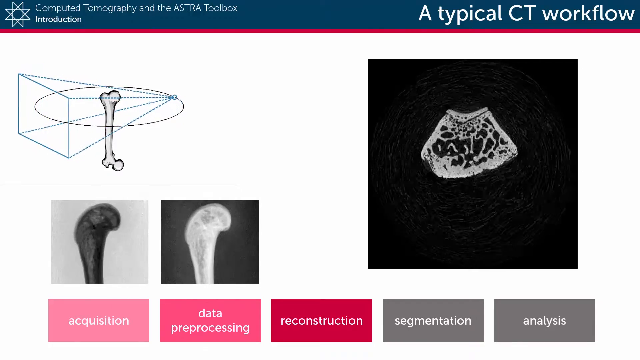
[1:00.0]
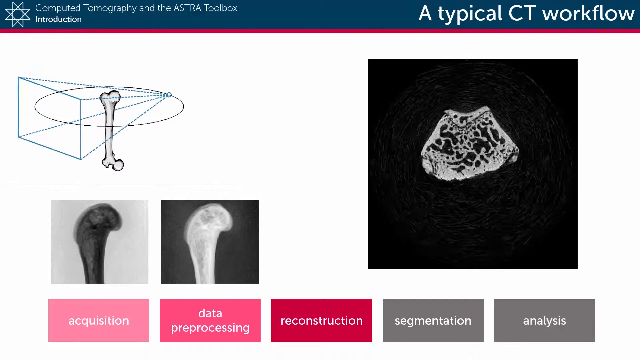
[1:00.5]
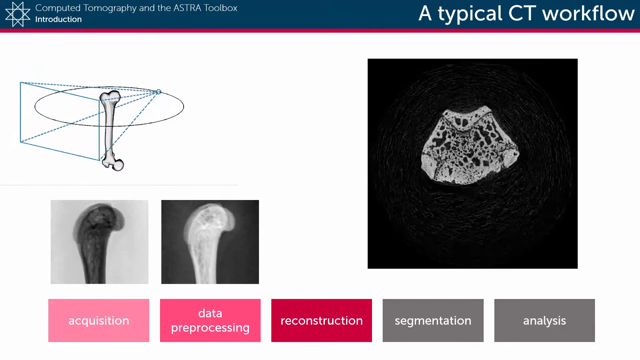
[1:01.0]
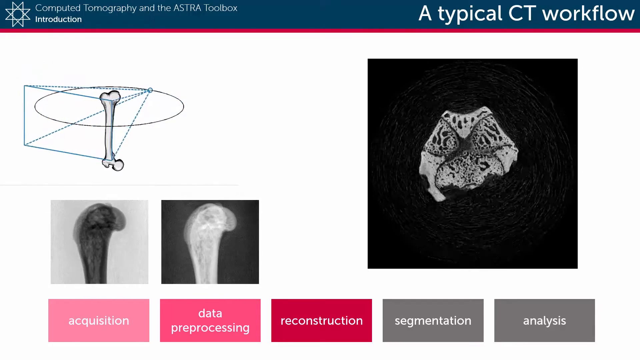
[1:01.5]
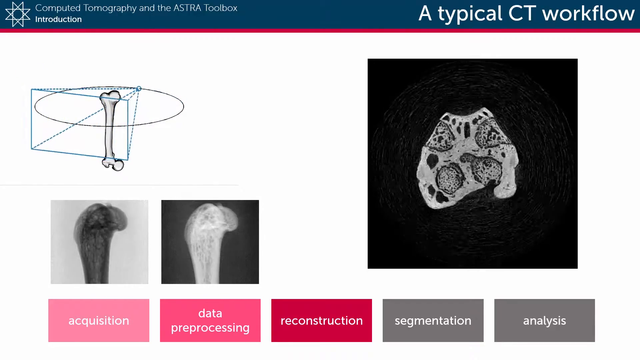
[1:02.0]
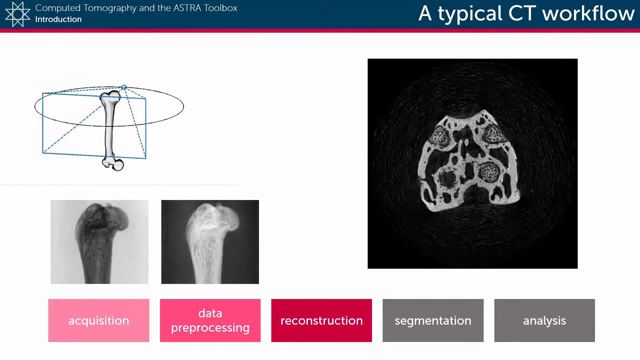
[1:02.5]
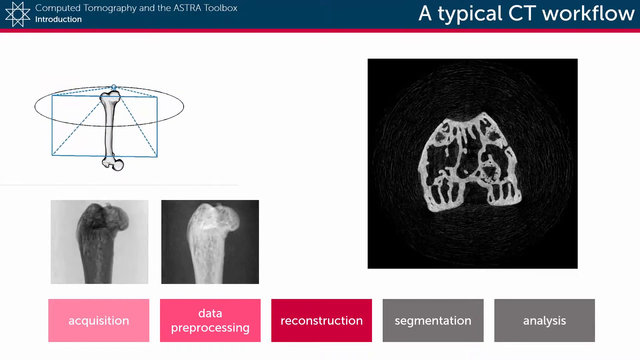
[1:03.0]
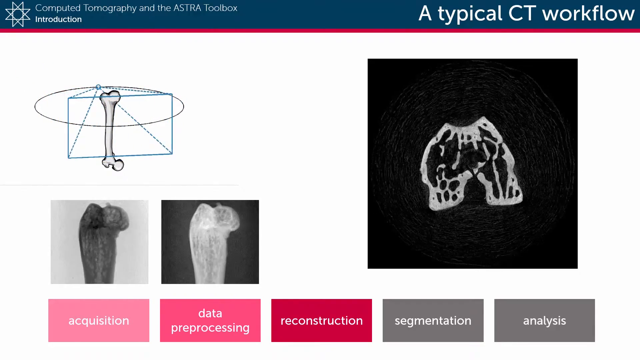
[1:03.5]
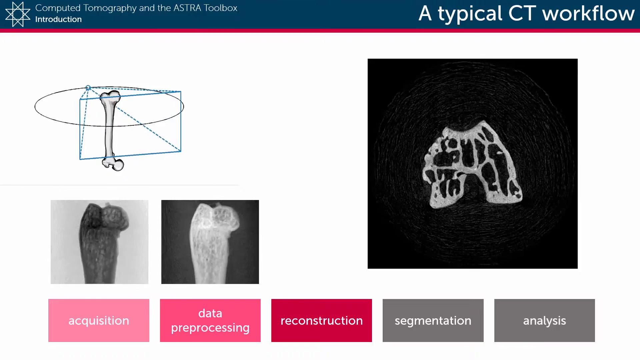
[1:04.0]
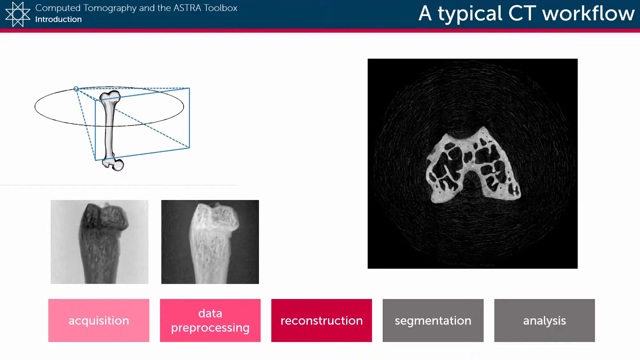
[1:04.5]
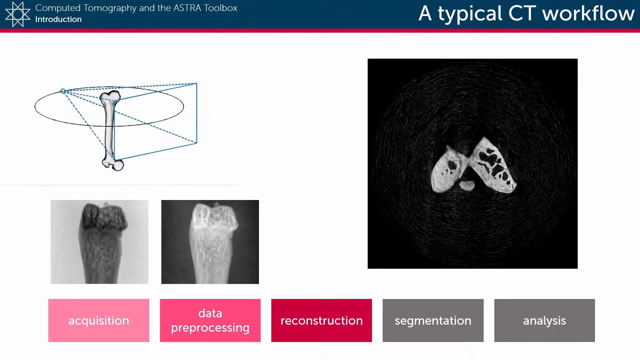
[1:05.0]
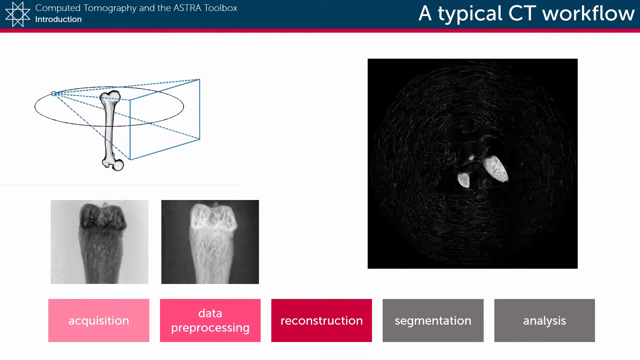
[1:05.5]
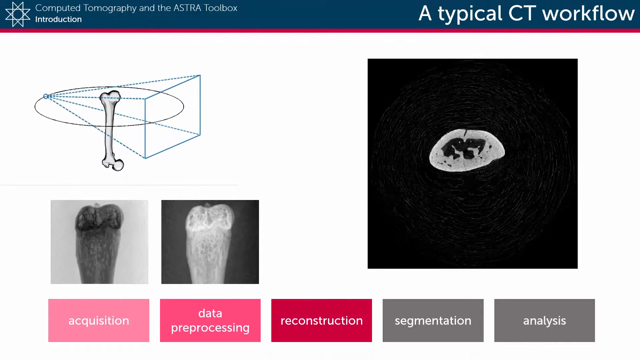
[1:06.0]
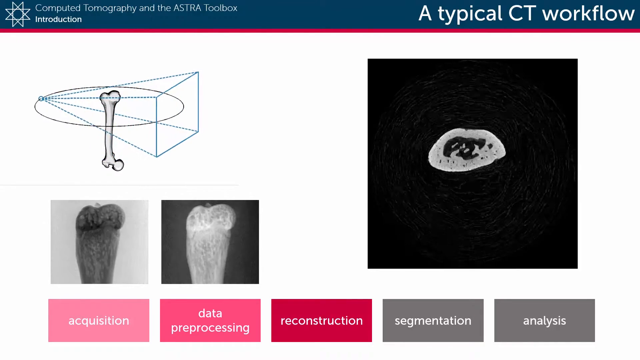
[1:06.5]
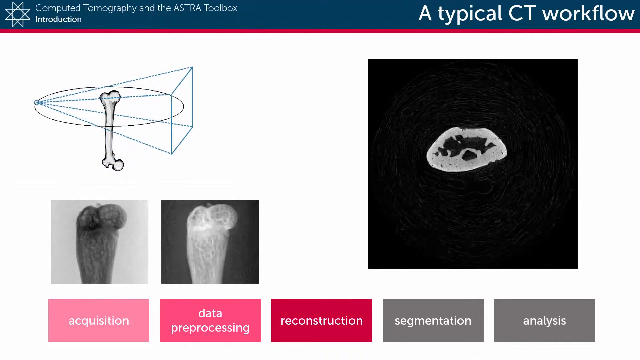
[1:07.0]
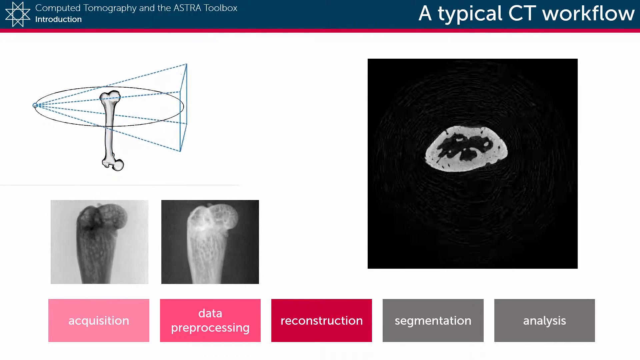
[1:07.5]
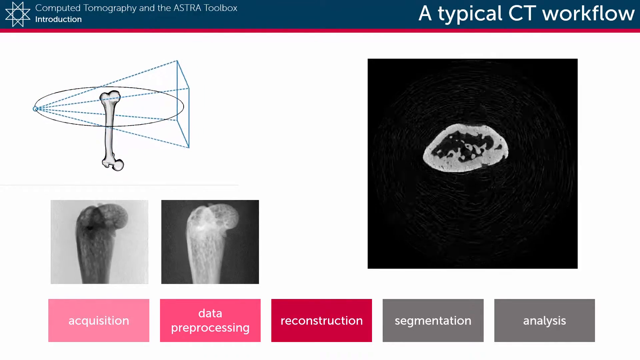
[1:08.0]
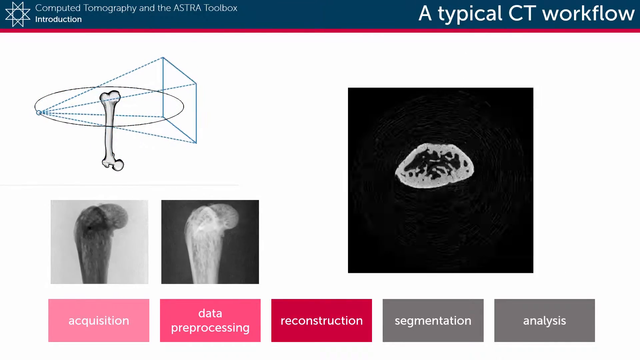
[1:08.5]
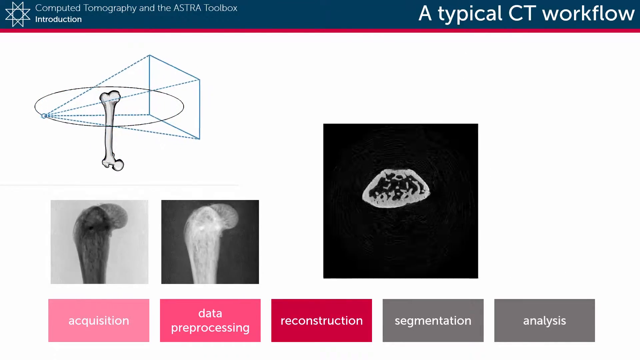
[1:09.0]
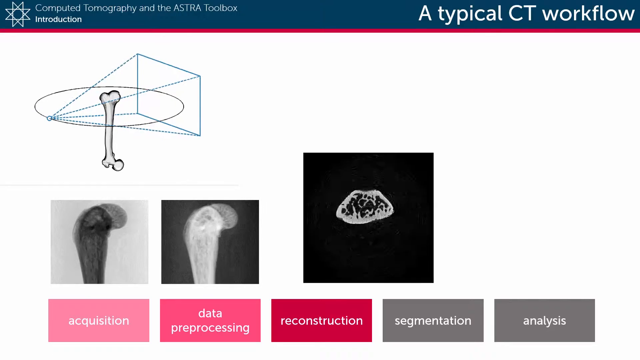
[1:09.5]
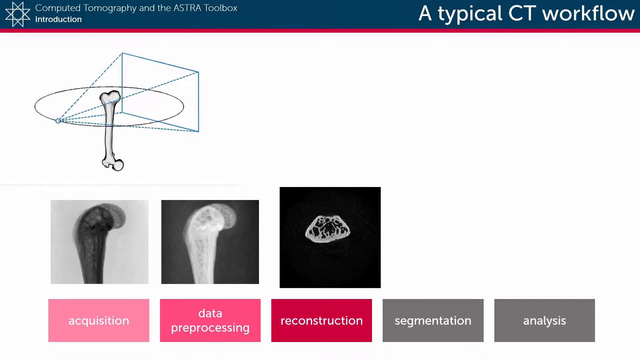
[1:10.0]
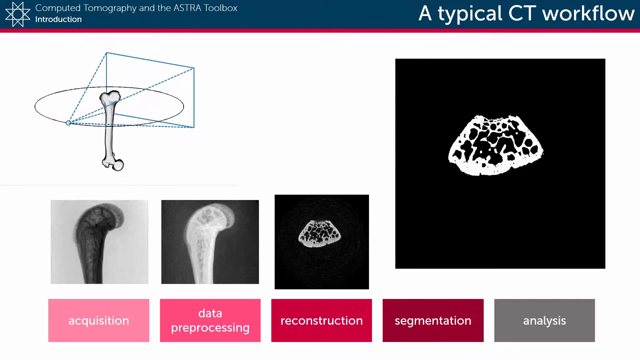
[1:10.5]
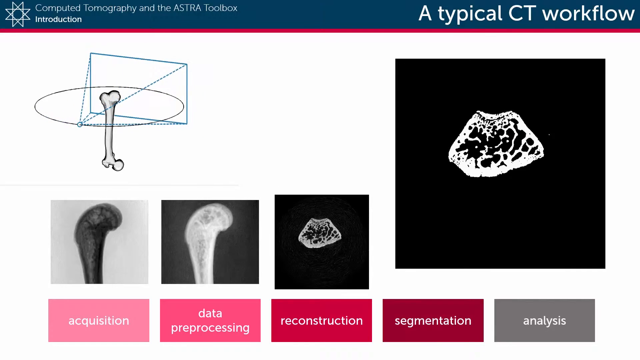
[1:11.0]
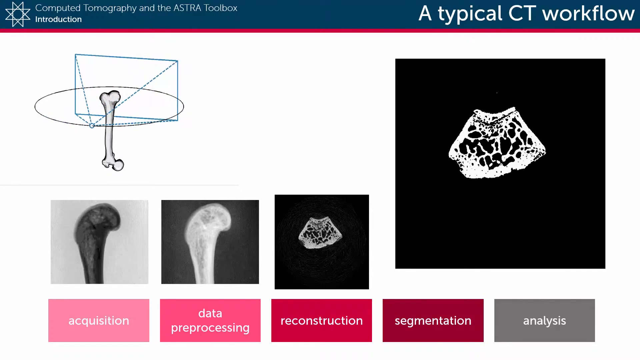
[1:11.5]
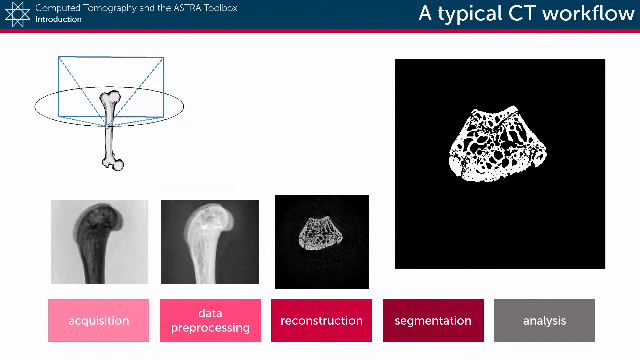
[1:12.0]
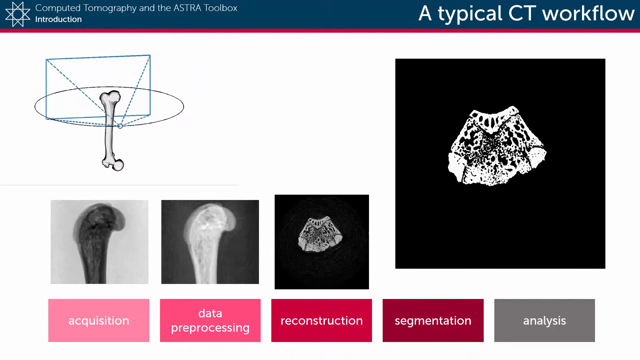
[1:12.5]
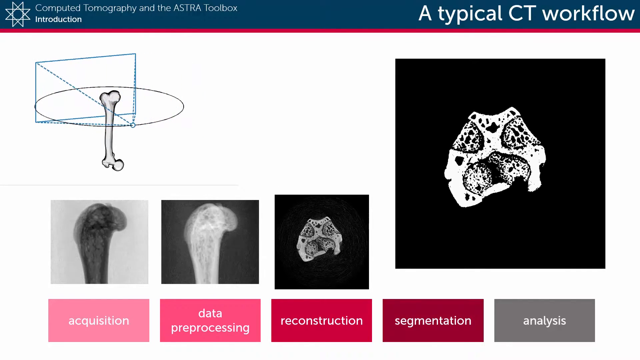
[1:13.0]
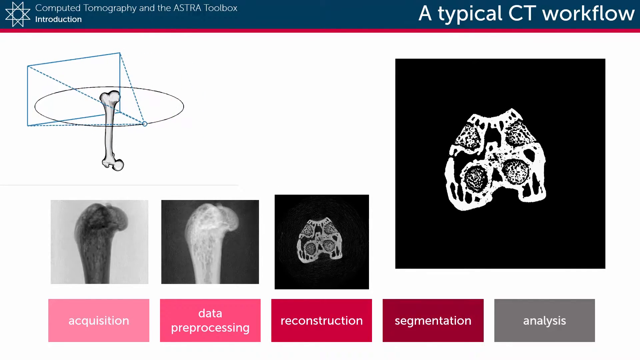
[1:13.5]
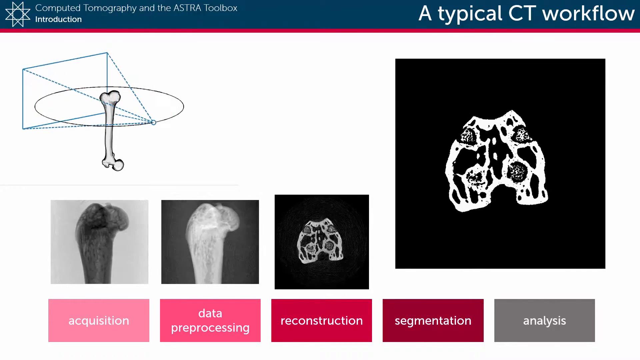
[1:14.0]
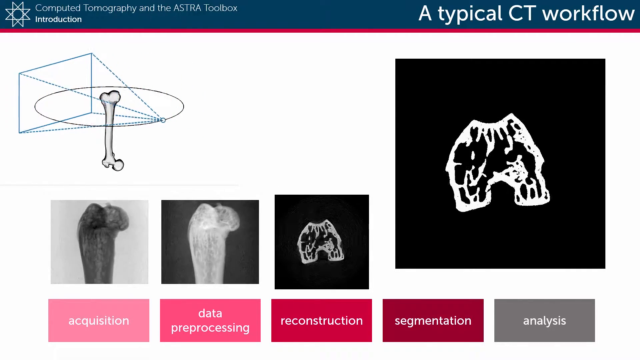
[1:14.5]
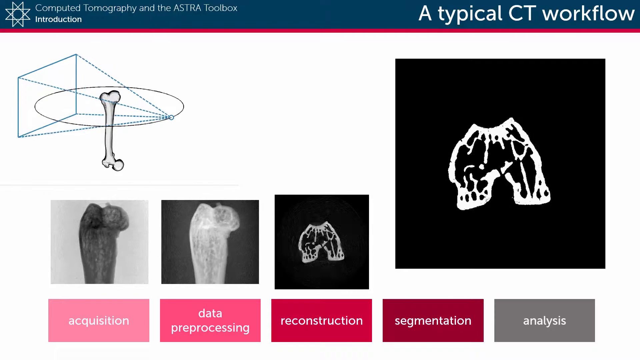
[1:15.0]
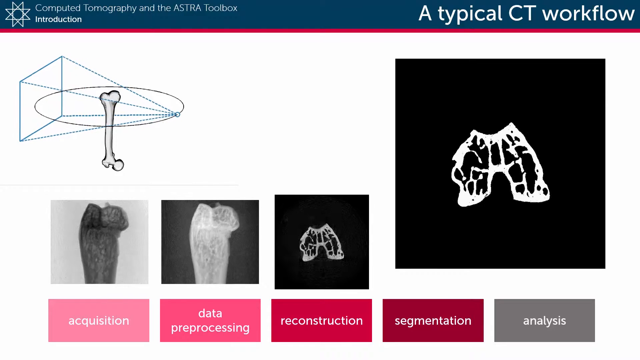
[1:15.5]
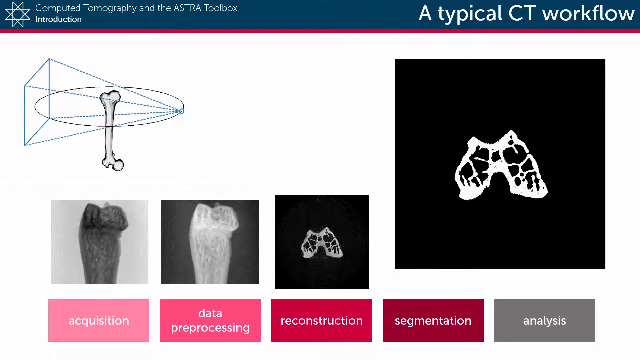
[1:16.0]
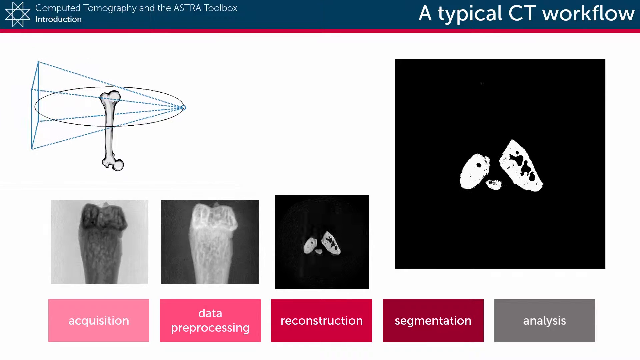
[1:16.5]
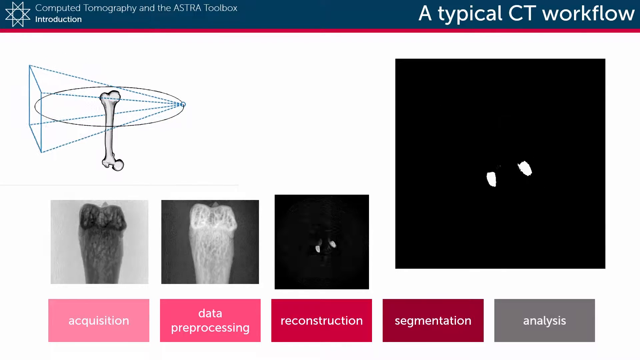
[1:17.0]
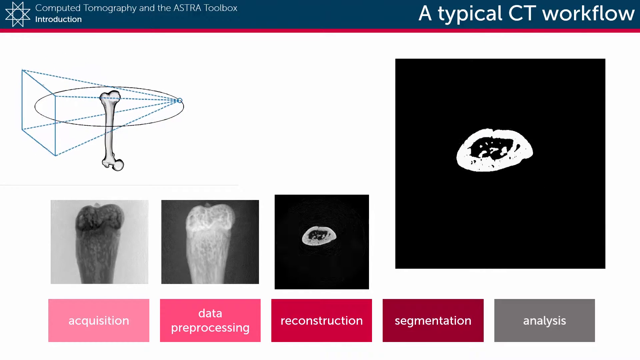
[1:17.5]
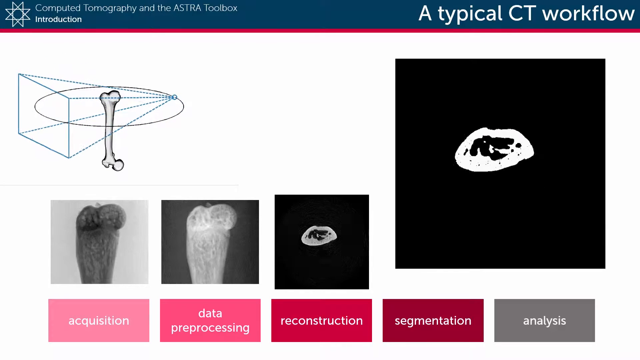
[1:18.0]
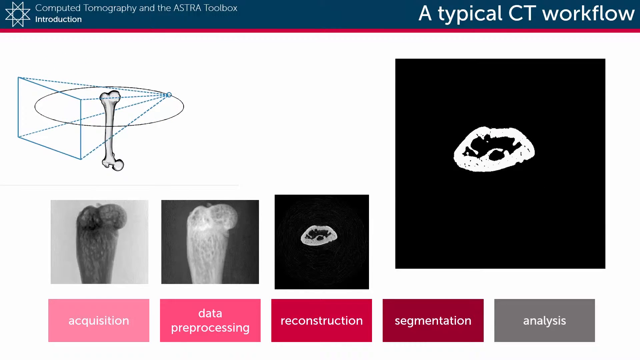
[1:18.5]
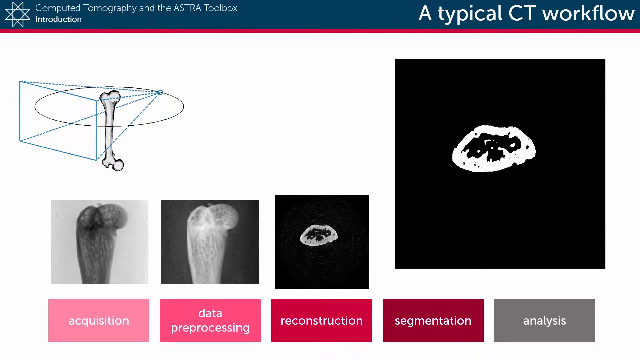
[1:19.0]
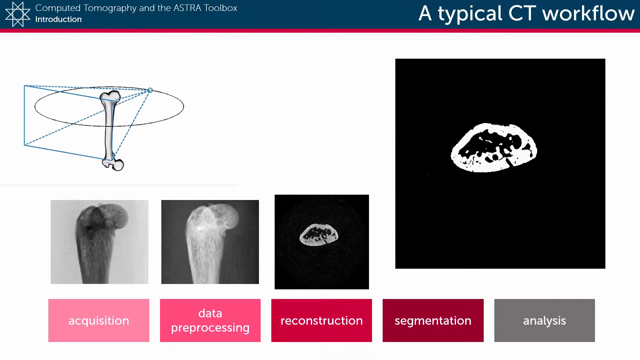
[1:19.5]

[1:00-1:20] Everything on the left side is still rotating. On the right side the image gets bigger, then kind of gets smaller again as it goes around; it starts expanding when the drawing is on the left side. That image then moves down to the left next to the other one. At the bottom, the fourth box from the left is now red, as another black square appears on the right side with white inside it like a bone and little black pieces. It kind of comes in as a little half circle at the top left, top right and across the bottom, then turns black and slowly disappears. It is the exact same image as the previous one. The two bone videos are still rotating, and the drawing in the top left is still rotating around. The fourth button at the bottom turns gray again and then red again.